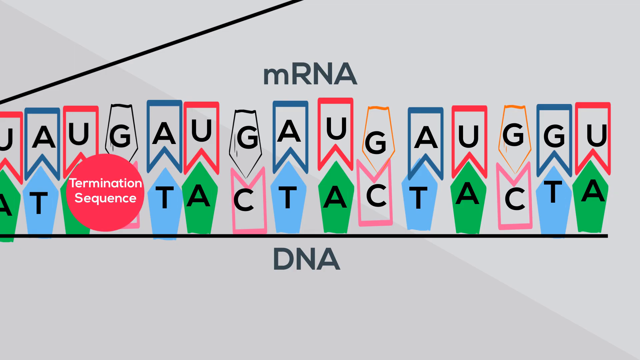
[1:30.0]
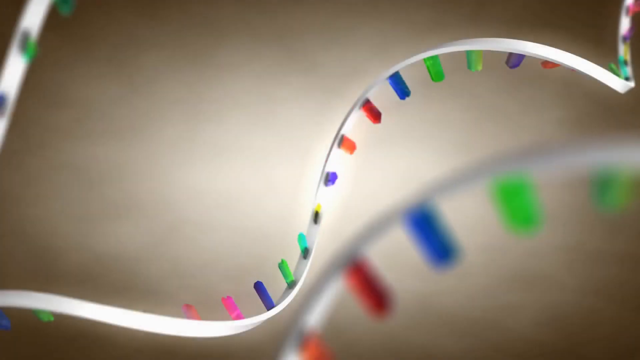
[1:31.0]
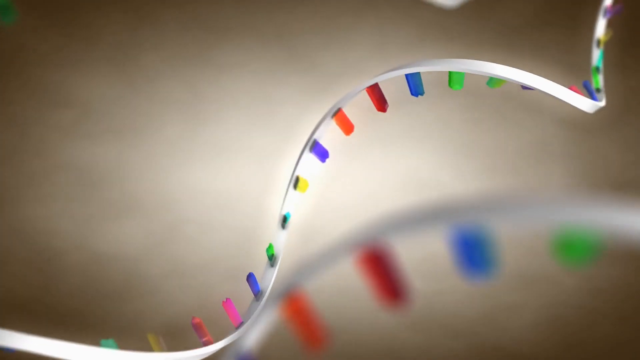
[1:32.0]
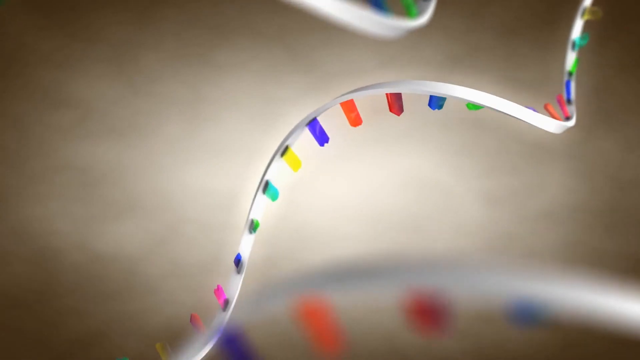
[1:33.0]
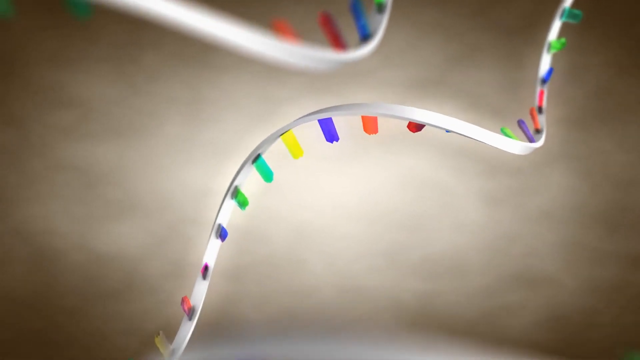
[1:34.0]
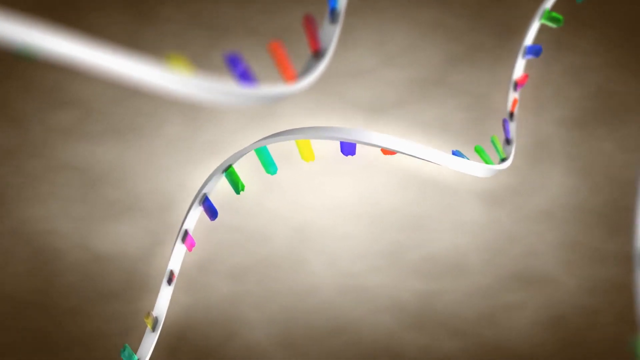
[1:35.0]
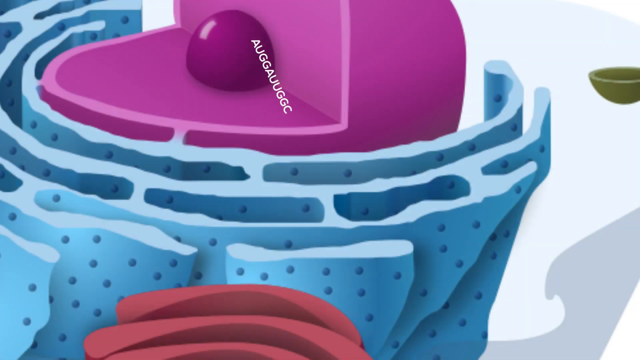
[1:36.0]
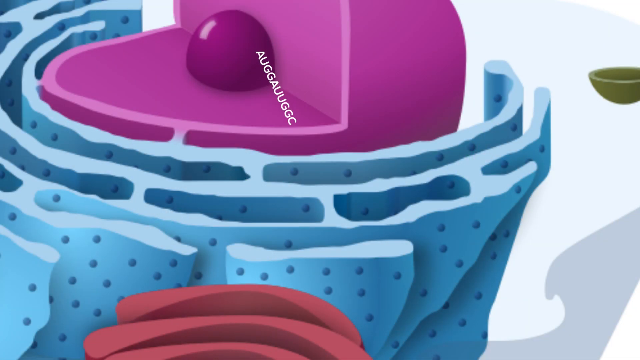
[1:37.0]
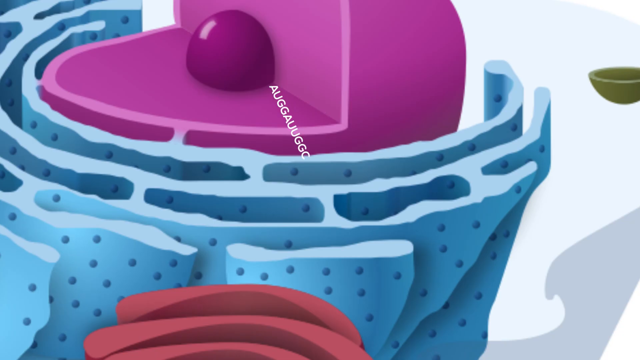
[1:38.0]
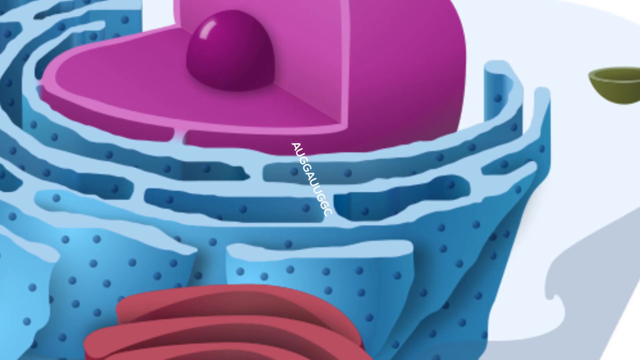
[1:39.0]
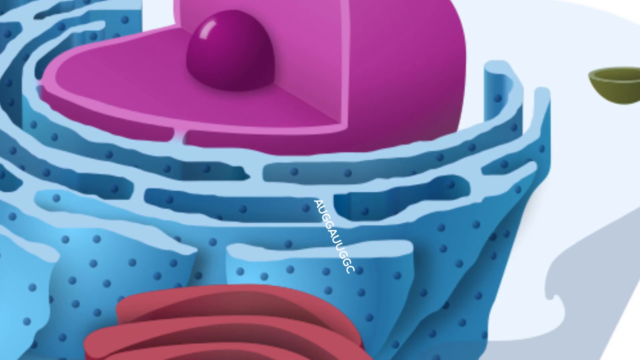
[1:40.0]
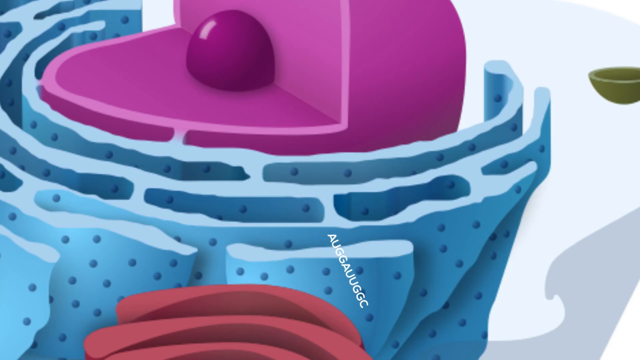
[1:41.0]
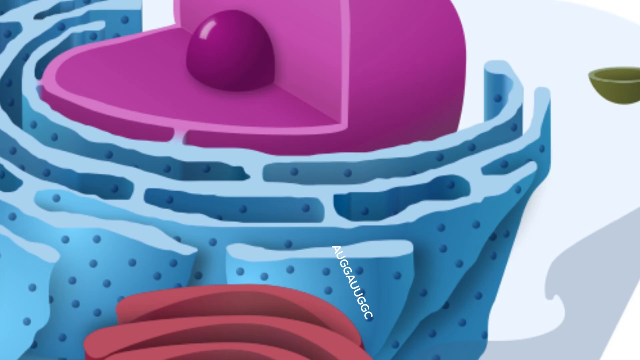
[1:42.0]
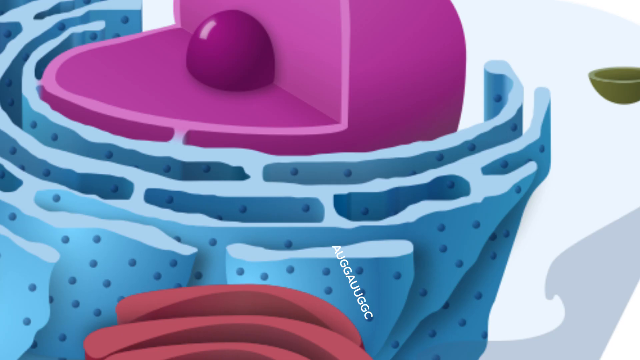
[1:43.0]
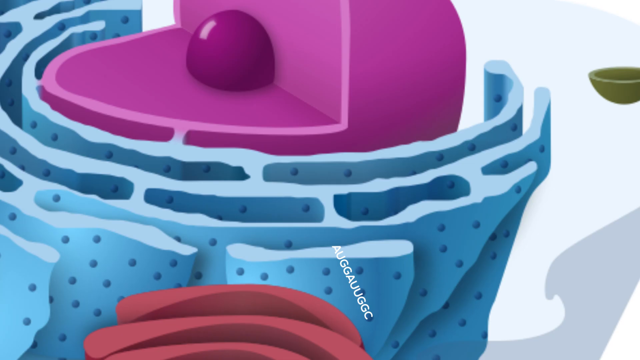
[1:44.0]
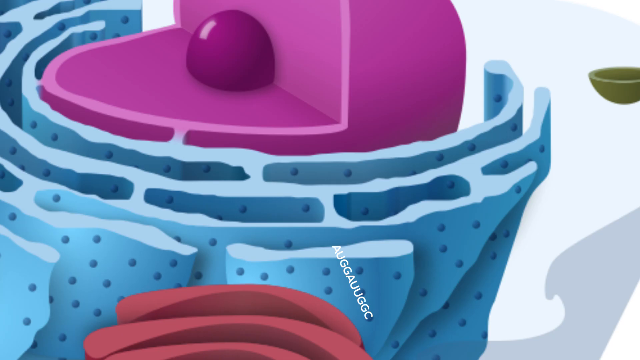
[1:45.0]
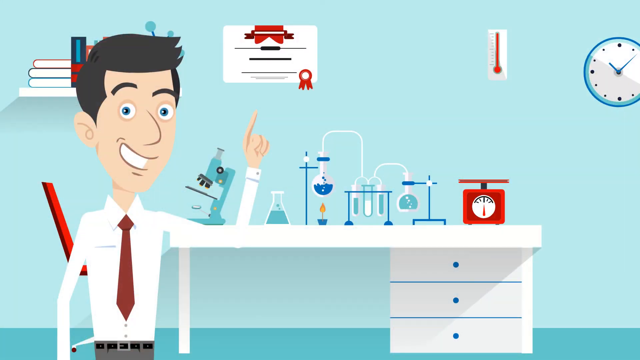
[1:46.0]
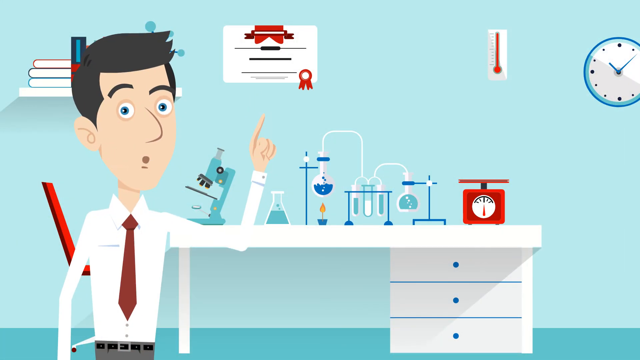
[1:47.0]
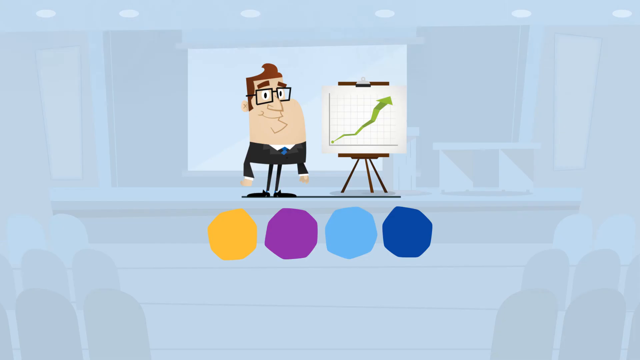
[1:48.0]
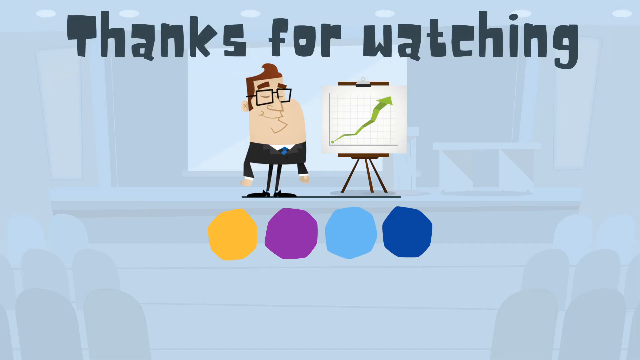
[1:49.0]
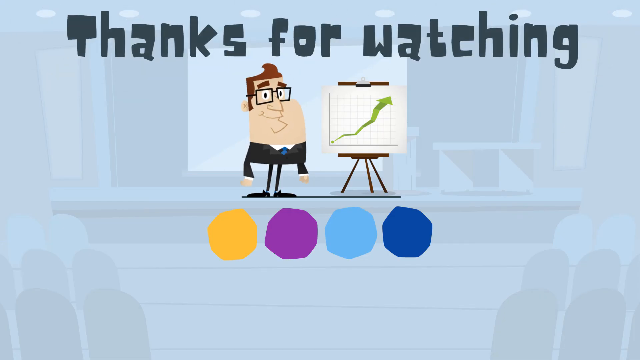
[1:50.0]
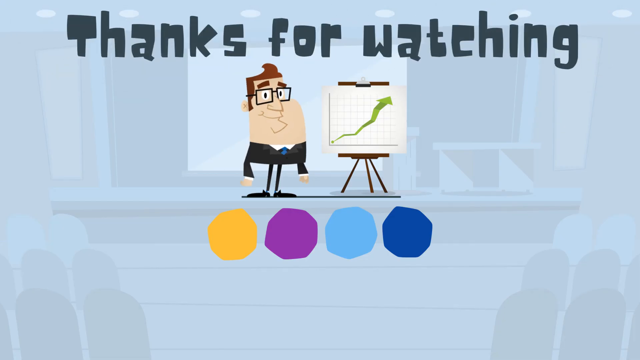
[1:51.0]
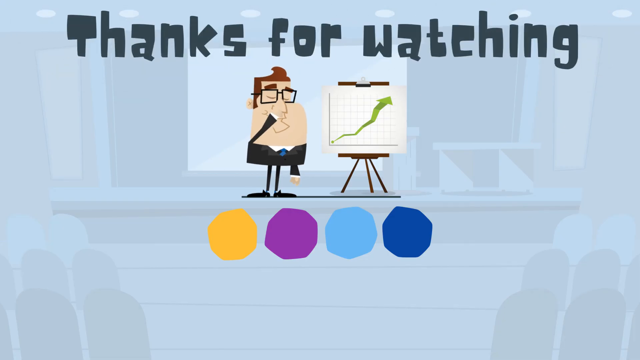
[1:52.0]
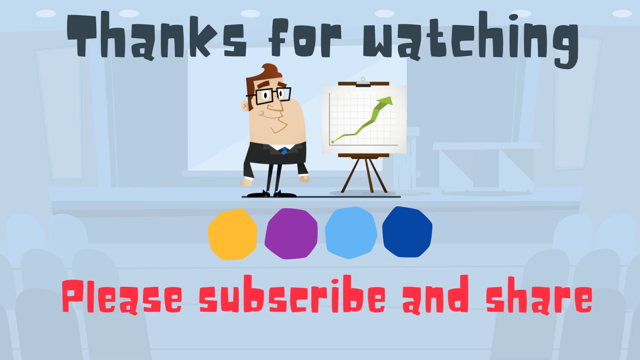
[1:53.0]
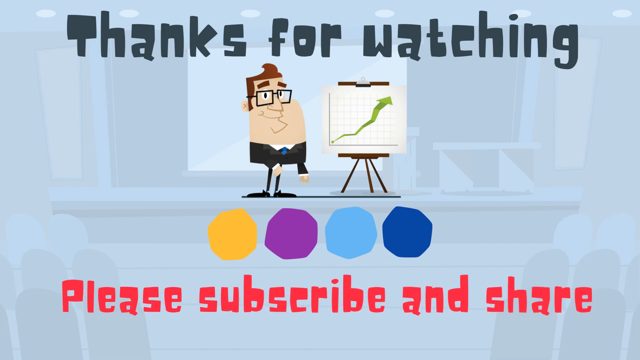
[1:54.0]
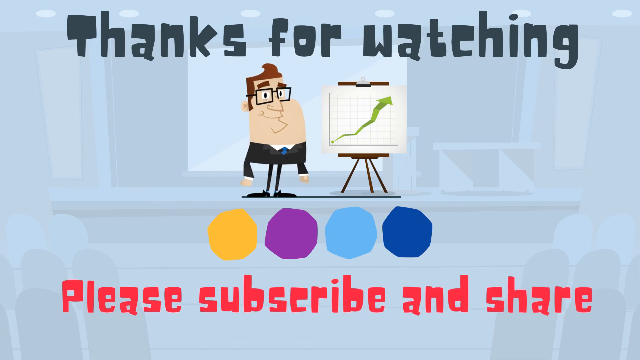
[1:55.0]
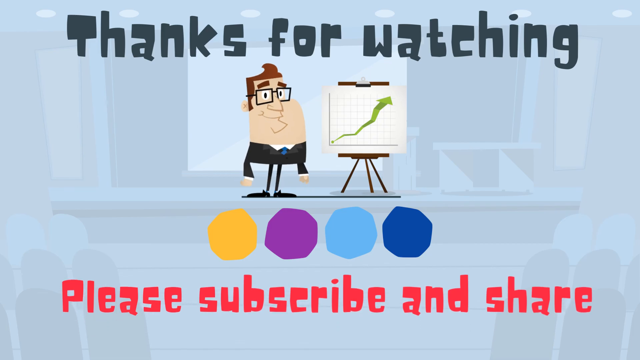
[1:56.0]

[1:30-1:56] A single strand of DNA with its pairs is shown, along with a picture of the nucleus of a somatic cell, from which a DNA code leaves and goes outside the nucleus. Next comes an infographic animation of a scientist or doctor in an office. Behind him is a desk full of test tubes and a red weighing scale, and there are also a clock, a thermometer and a certification on the wall. The scientist is male, wearing a white collared shirt and a red tie, with his hands pointing to the sky. The ending credits then show another infographic animation of a man in a suit and tie with a short torso and long legs. Next to him is a chart with a green arrow pointing upward, and large letters read "thanks for watching." The character moves his glasses closer to his face twice. Then another line of text appears at the bottom reading "please subscribe and share."